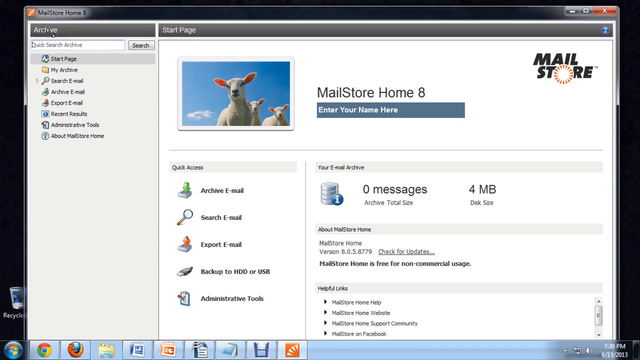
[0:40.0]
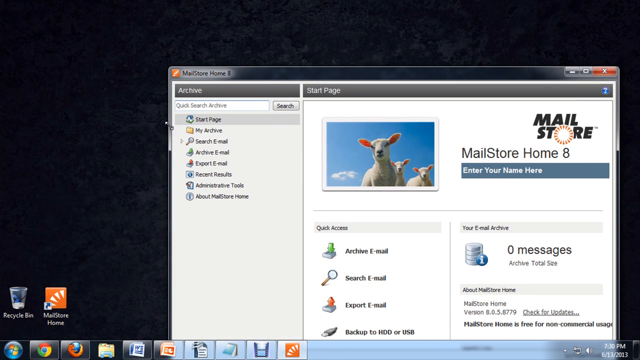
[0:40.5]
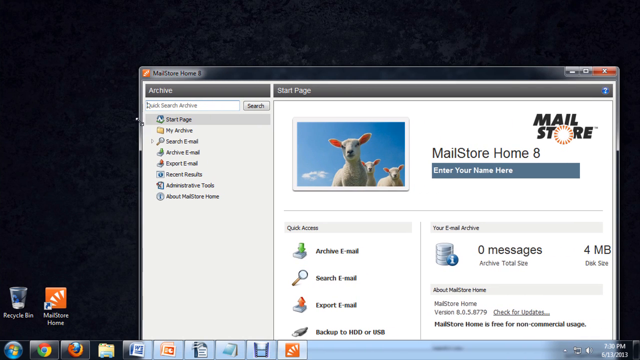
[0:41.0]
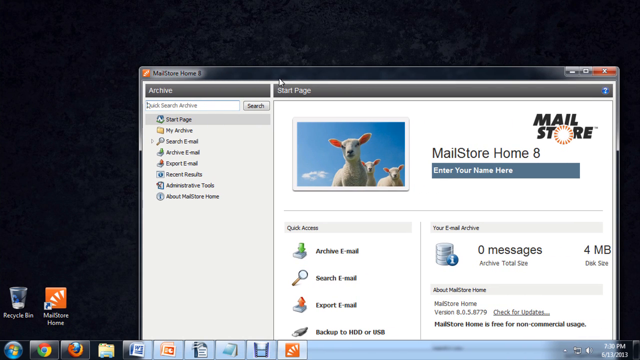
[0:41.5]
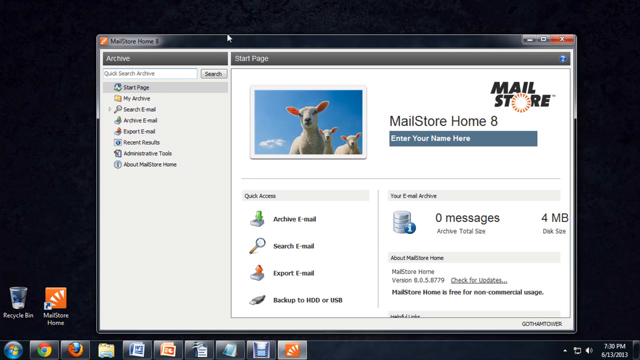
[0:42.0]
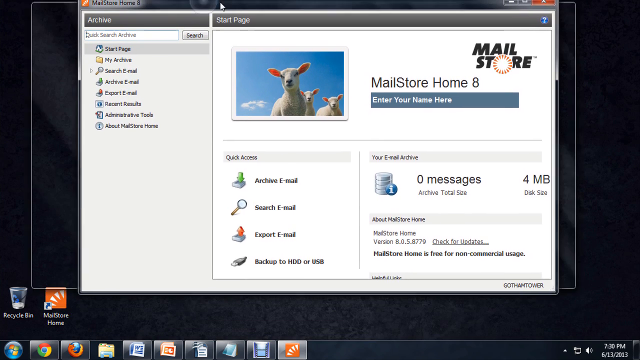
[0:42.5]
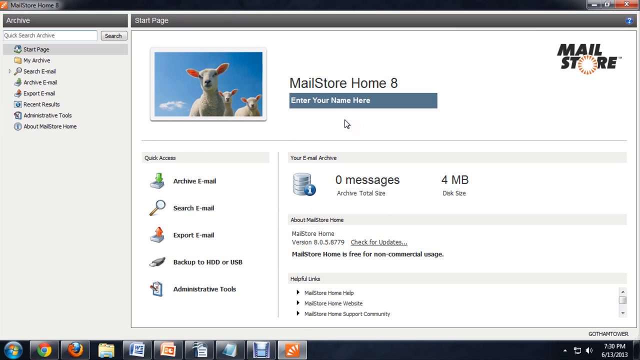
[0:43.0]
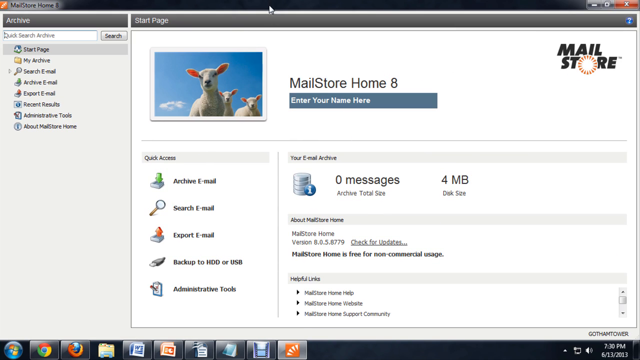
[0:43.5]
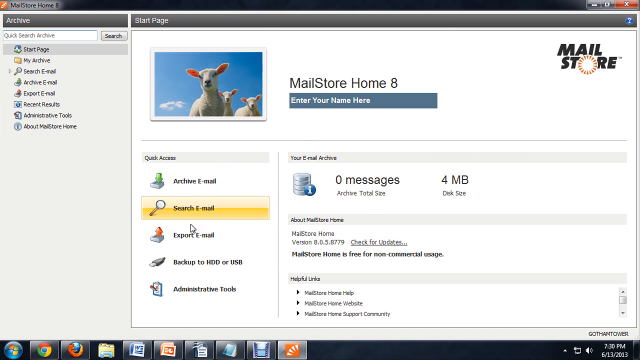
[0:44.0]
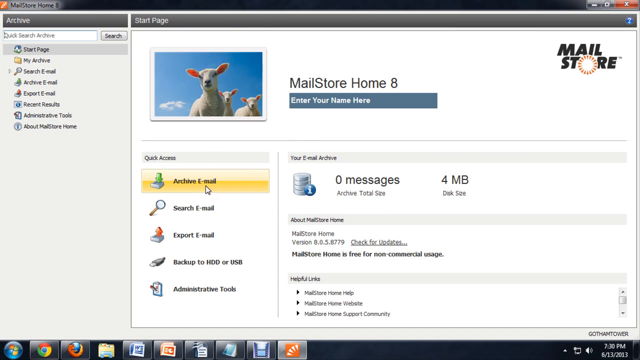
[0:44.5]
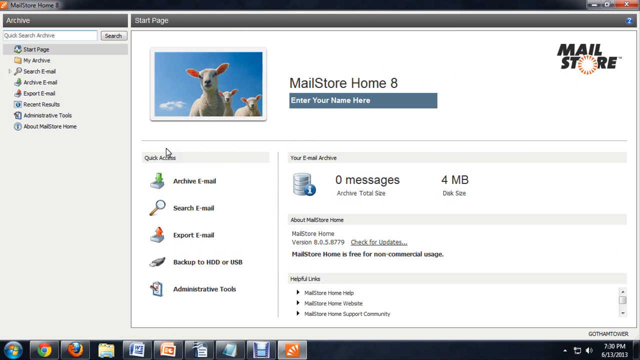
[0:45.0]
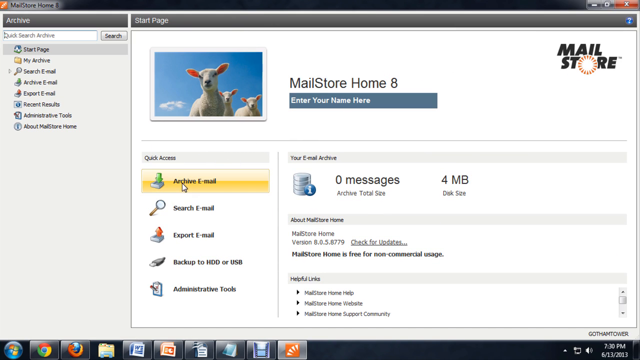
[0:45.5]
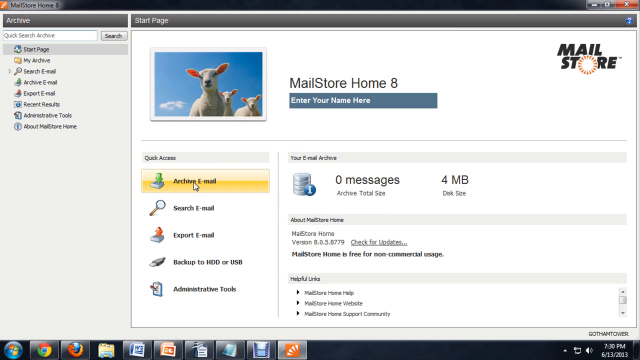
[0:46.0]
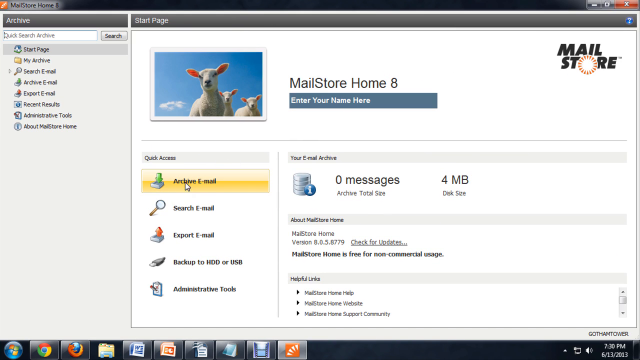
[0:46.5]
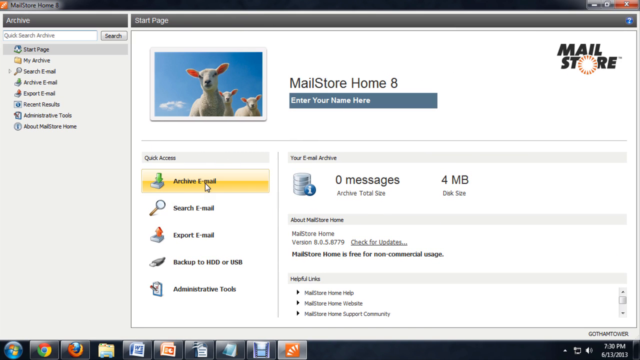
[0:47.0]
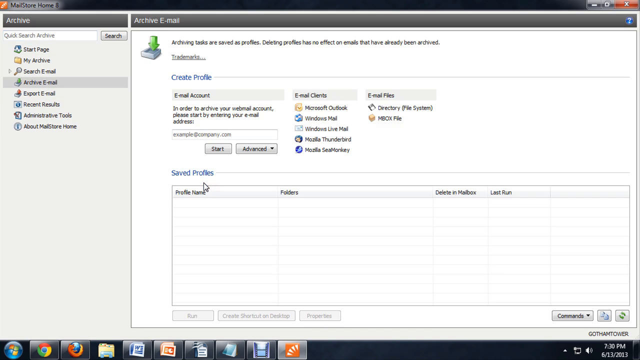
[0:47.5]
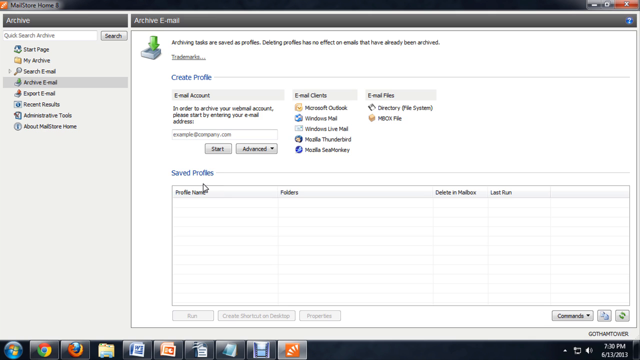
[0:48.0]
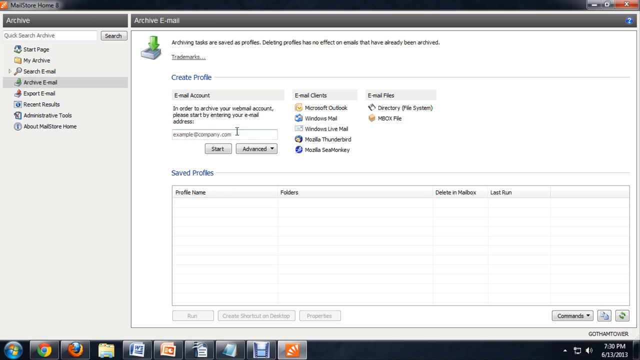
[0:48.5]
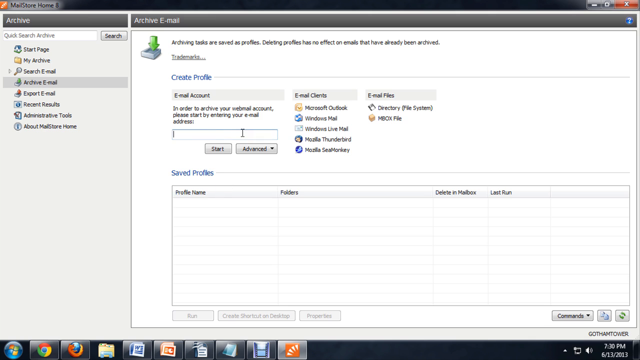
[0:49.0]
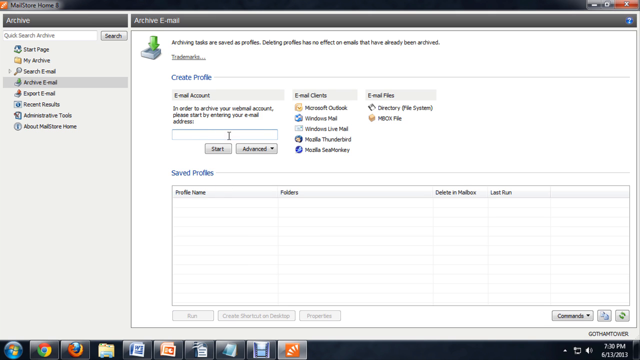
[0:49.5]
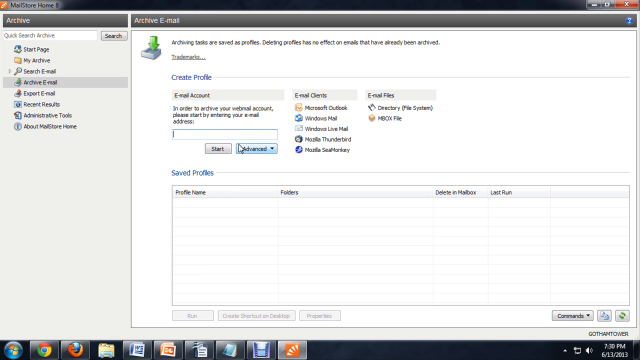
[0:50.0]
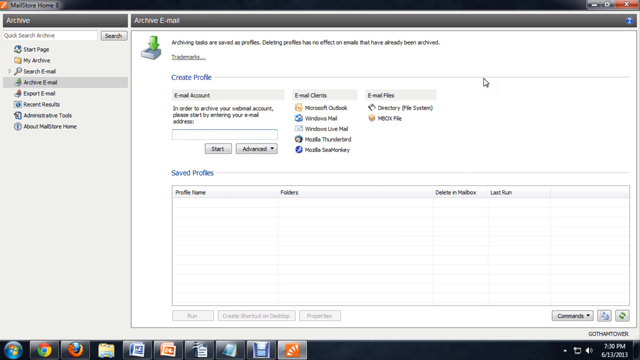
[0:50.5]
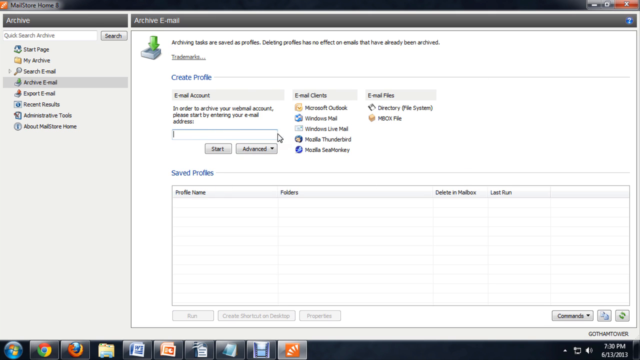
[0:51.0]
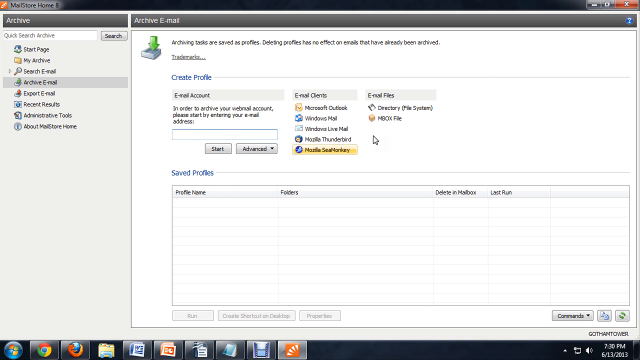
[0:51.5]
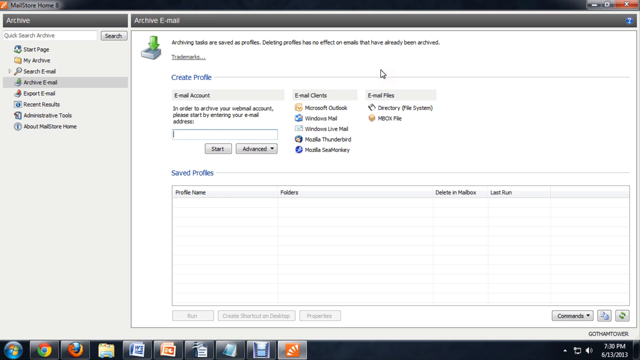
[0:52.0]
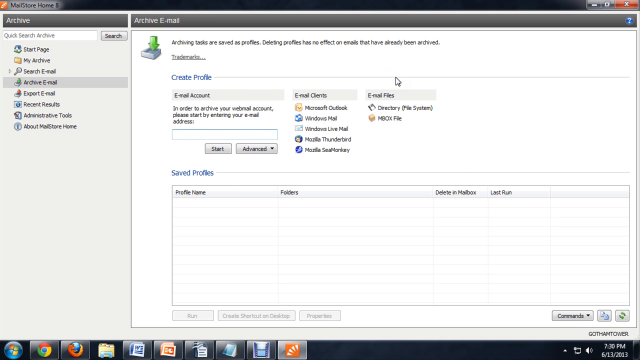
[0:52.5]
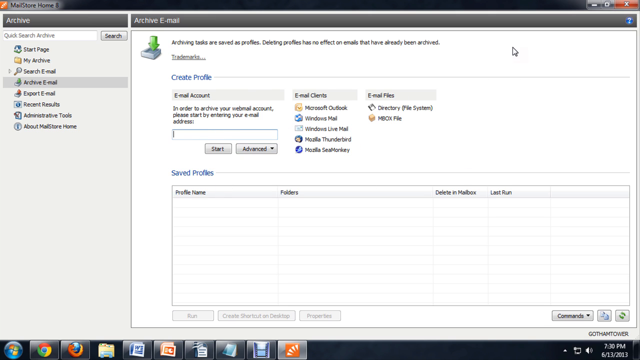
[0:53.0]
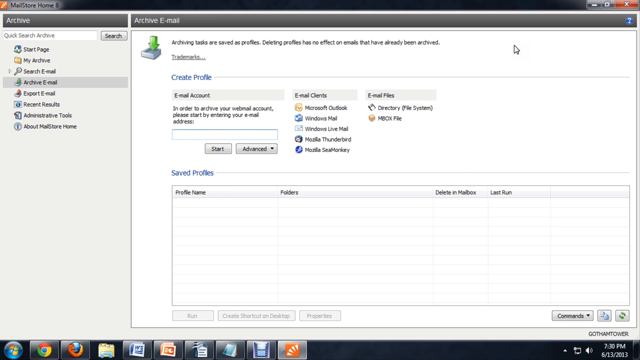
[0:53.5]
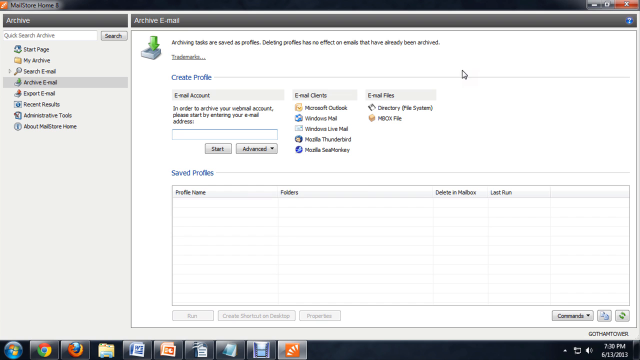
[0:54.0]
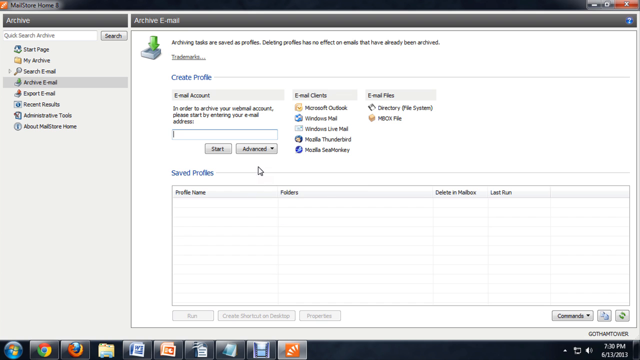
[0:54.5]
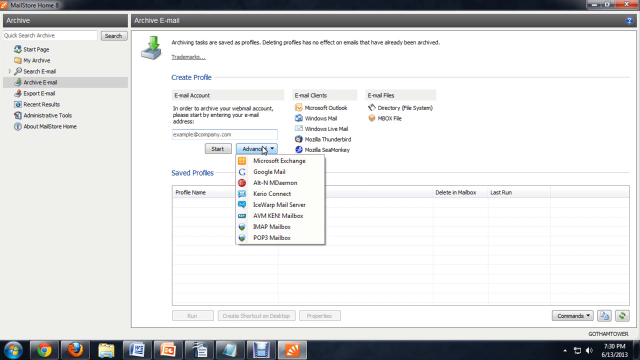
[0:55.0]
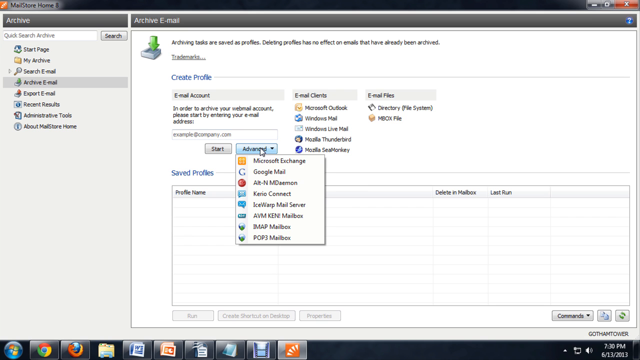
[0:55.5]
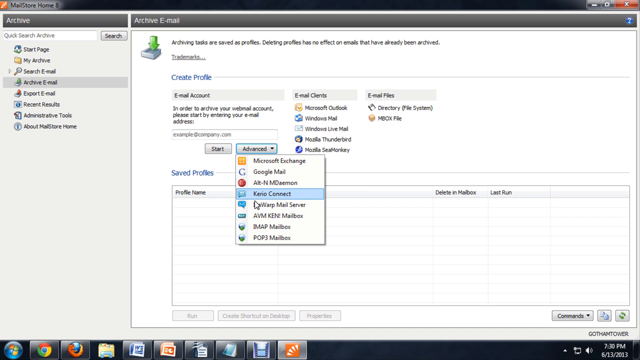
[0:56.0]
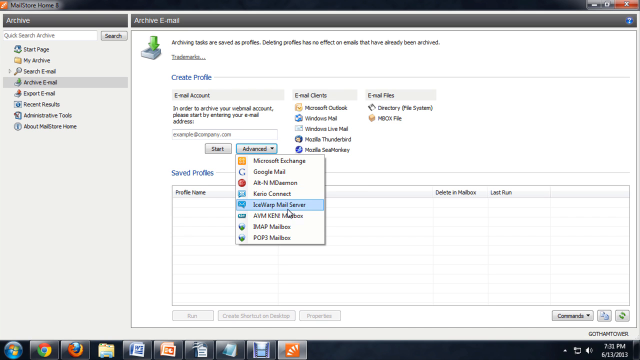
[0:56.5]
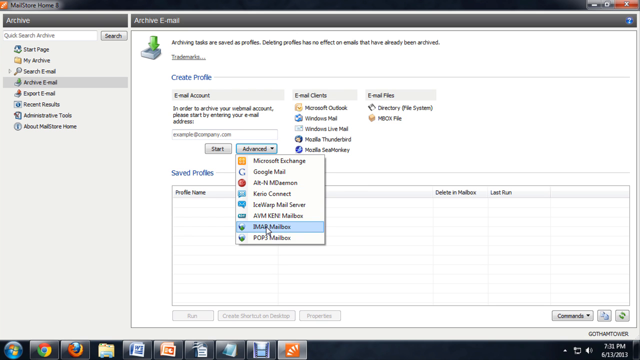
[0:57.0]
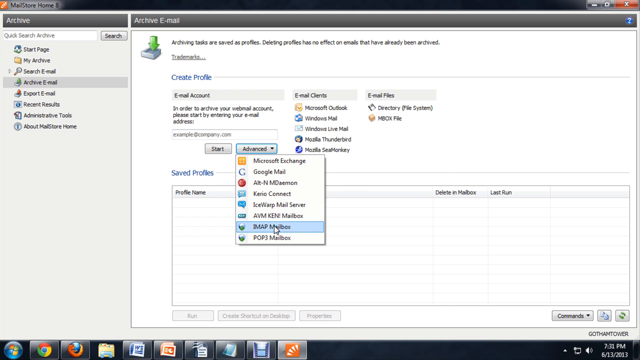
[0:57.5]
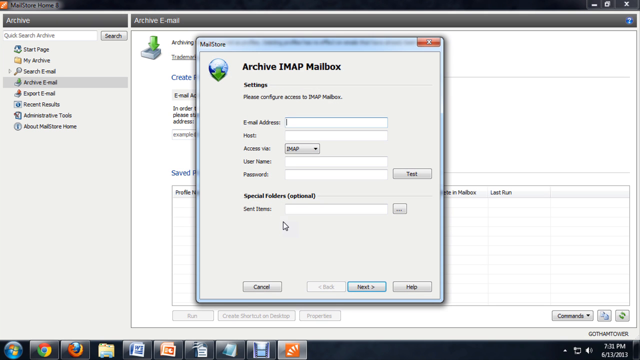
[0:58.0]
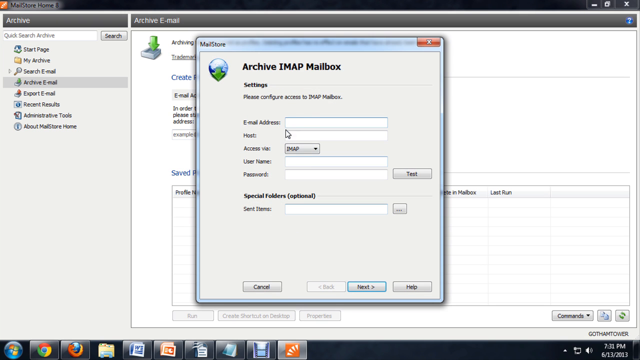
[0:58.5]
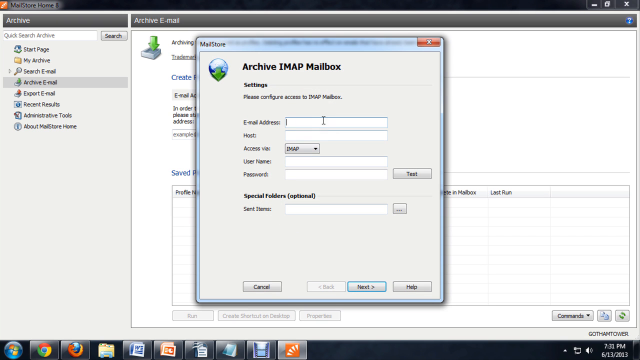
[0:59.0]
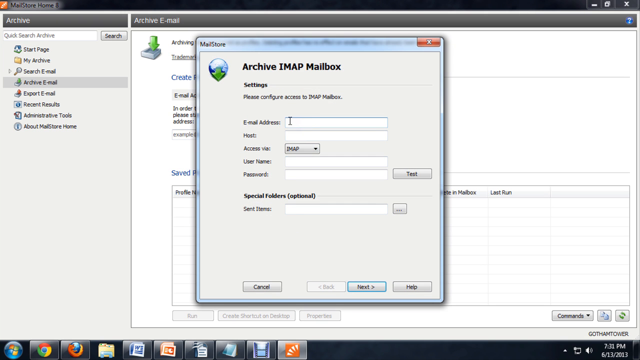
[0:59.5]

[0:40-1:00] The presenter has opened an app called Mail Store Home 8 on his Windows 7 laptop and is moving things around on the screen. The app has tabs including Start Page, My Pictures, Search Email, Archive Email, Email, Return Results, an Administrative tab, and more information about the application. In a quick access area he hovers over the Archive Email tab and clicks it. The next screen shows where a profile can be created for an email account with a start button, and another option, Advanced, with a drop-down box. He looks like he is about to start typing in the box, but moves over to the Advanced tab, clicks it, and opens the drop-down box. Its options include Microsoft Exchange, Google Mail, Carriage Connect, IMAP, POP3 and some others that cannot be made out. He clicks Archive IMAP mailbox, which has fields for information, but he has not entered any yet.